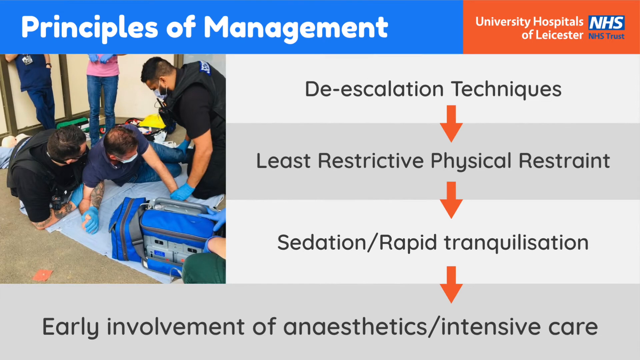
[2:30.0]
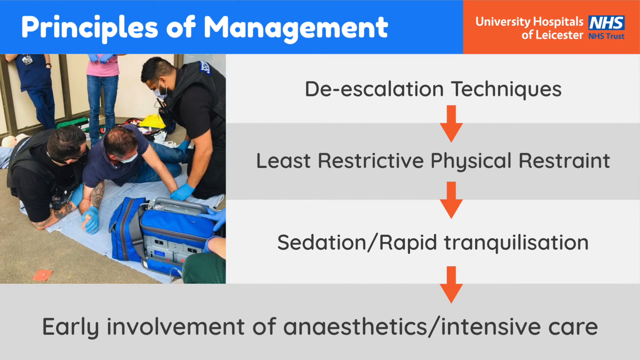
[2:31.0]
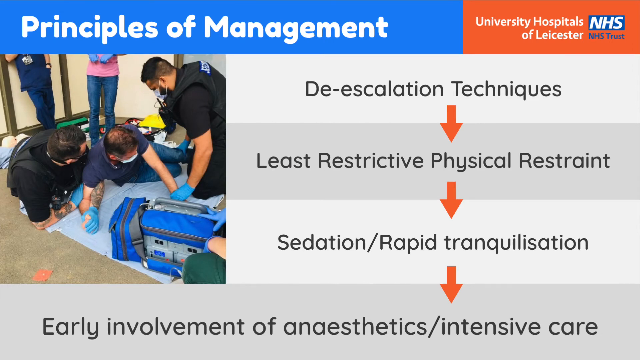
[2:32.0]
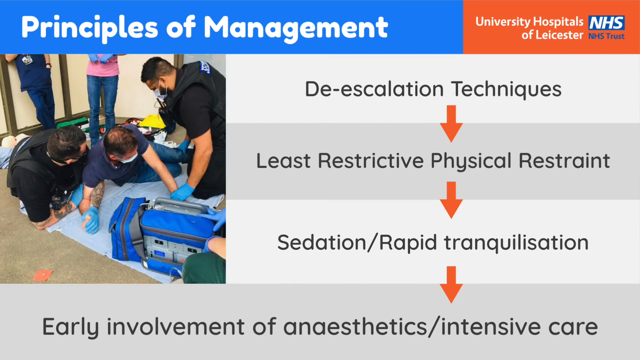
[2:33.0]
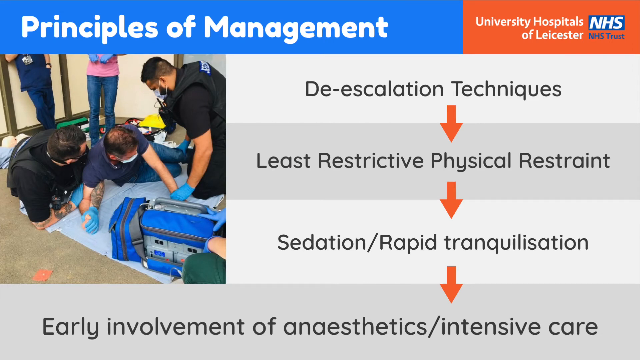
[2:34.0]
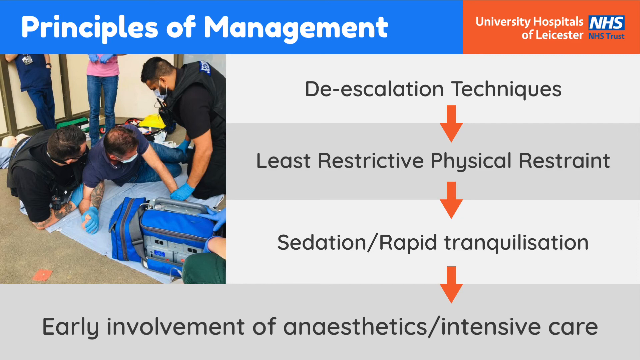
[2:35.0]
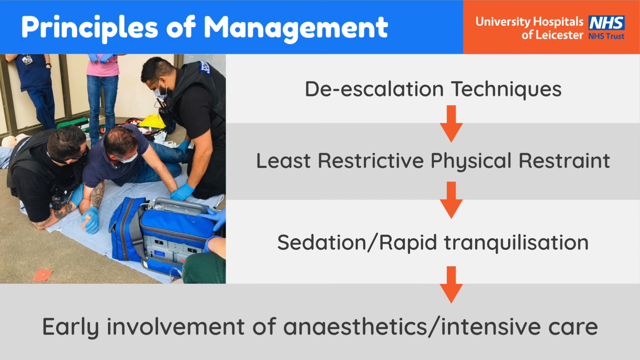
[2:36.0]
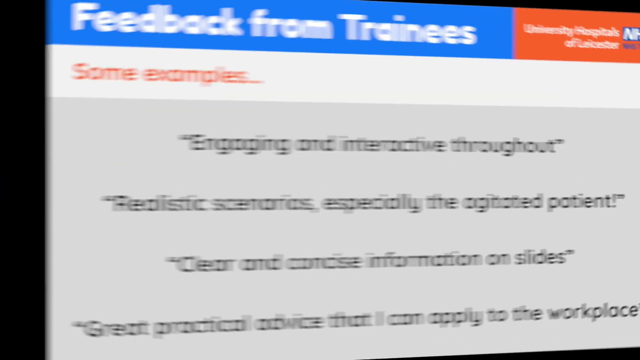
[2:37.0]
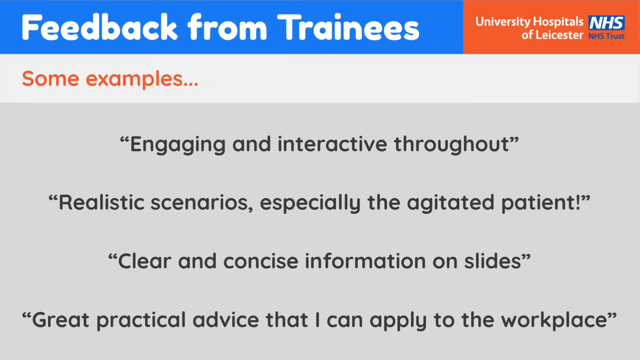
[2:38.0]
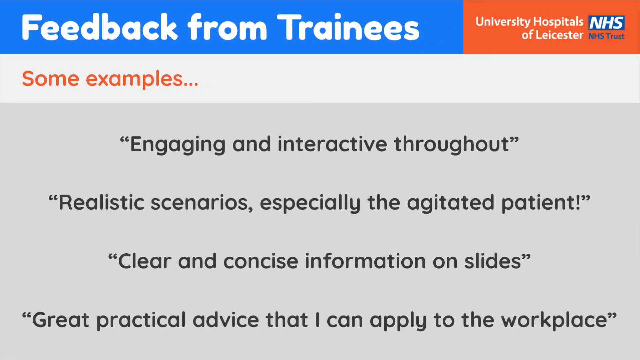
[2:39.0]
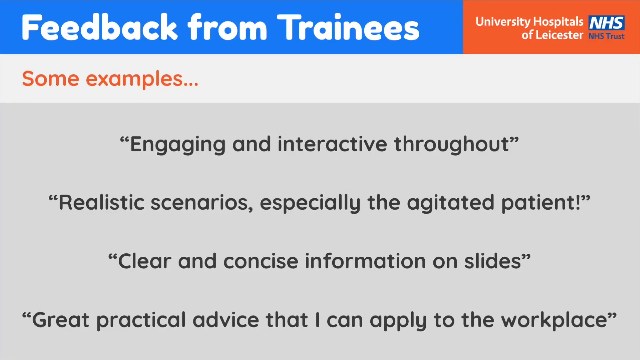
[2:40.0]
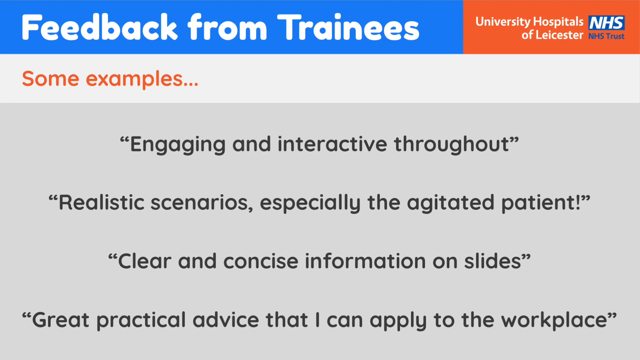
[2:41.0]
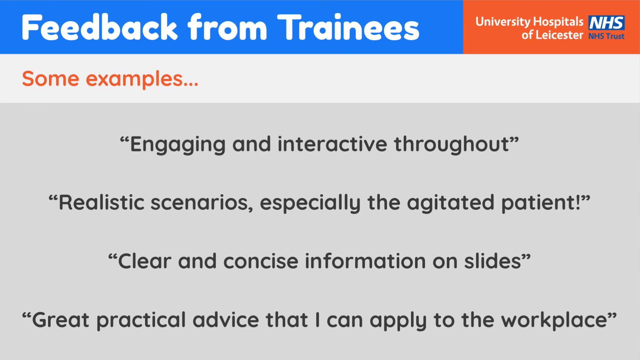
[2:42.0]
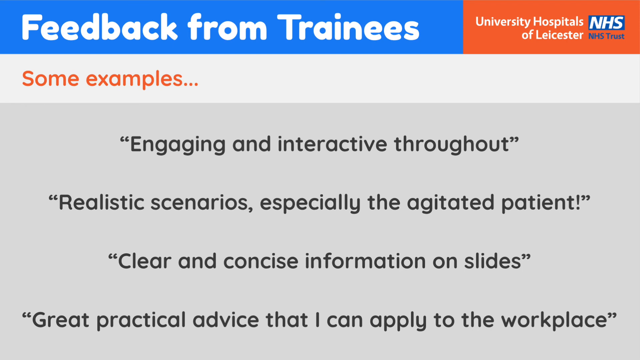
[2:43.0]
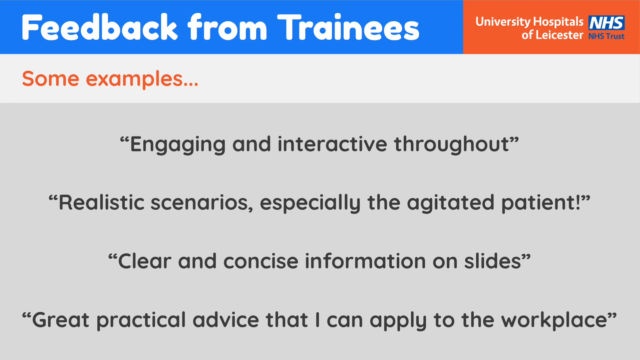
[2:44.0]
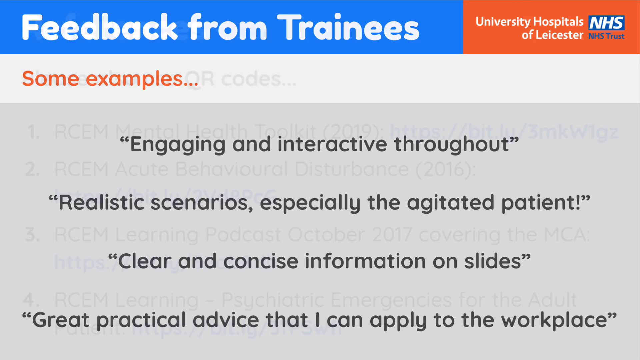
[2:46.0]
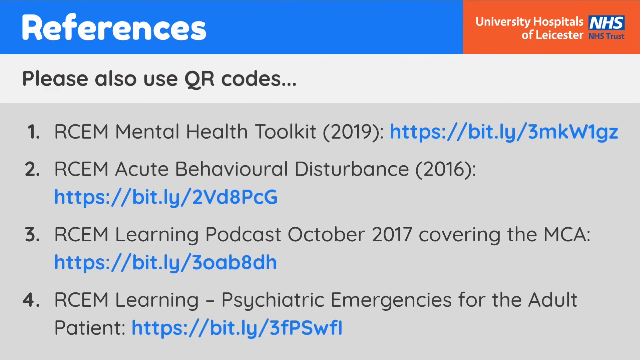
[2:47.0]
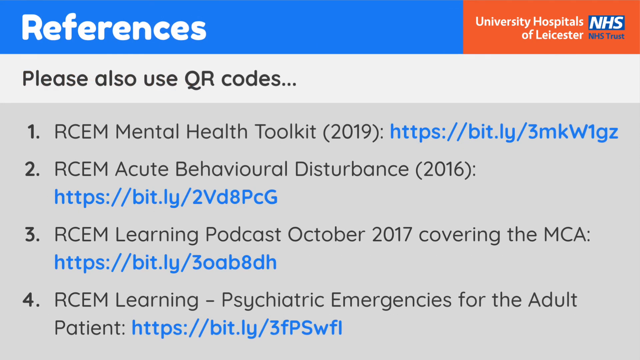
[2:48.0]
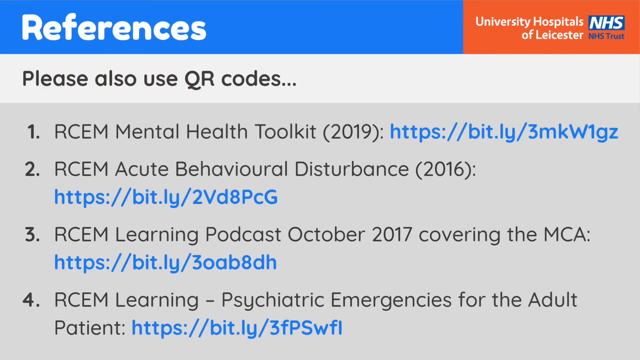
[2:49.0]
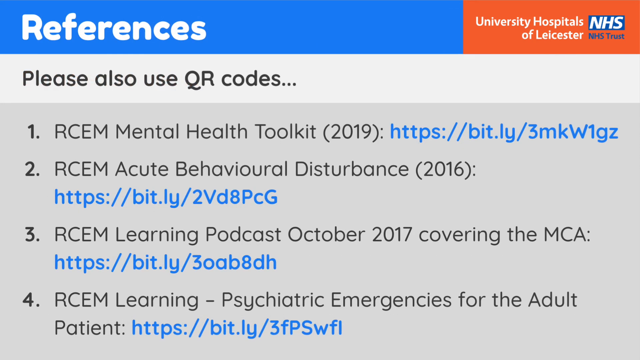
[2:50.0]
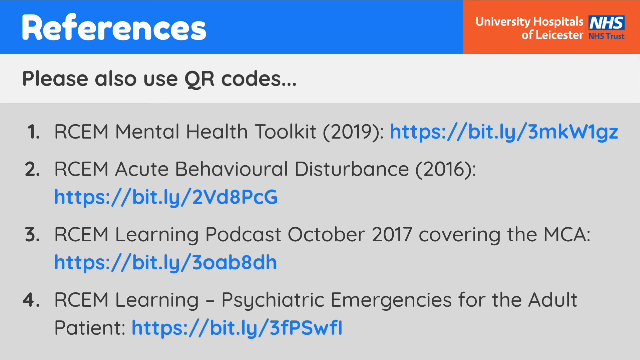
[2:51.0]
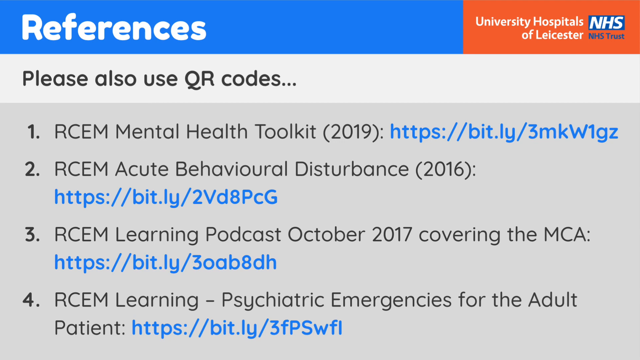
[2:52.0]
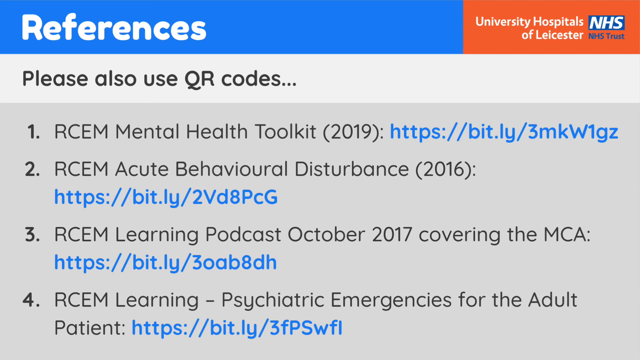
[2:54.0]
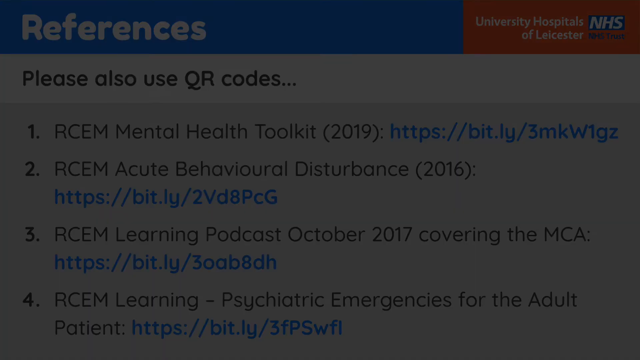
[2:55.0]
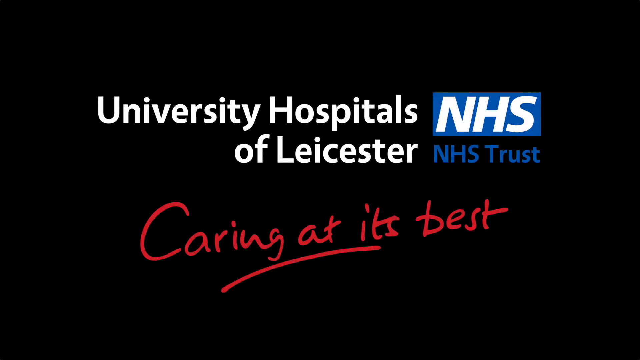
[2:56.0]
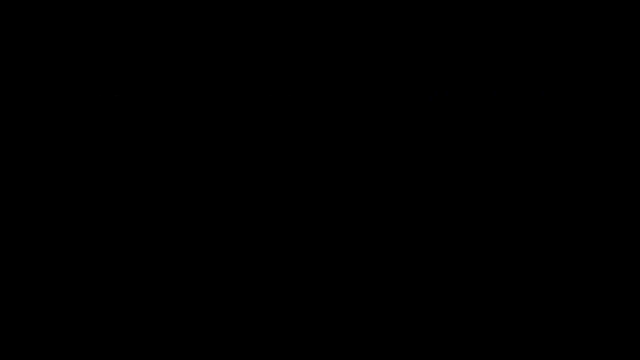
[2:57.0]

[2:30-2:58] A page on principles of management for a crisis patient coming to the ED lists de-escalation techniques, least restrictive physical restraint, and sedation rapid tranquilization, with an orange arrow between each one pointing down. At the bottom of the screen it says "early involvement in anesthetics". Examples are given such as "engaging and interactive throughout", "realistic scenarios" and "clear and concise information". A references page gives the sources of information for the class and websites that can be clicked, and says "please also use QR codes", with one of the codes seen earlier. At the very end, the name of the university at Lancaster flashes very quickly on a black screen, written in white with a little red.